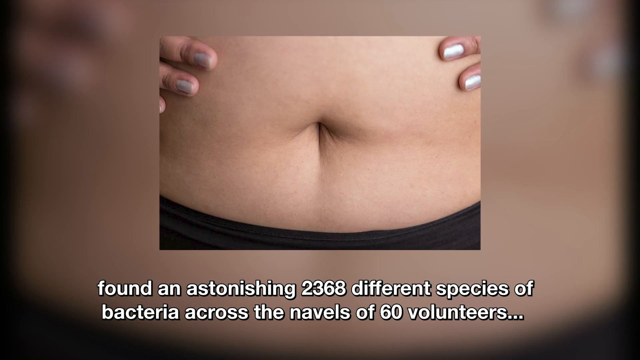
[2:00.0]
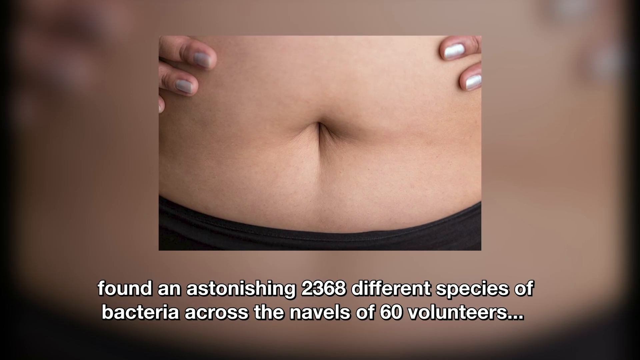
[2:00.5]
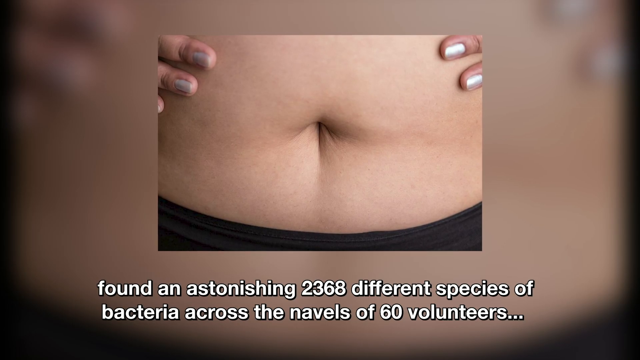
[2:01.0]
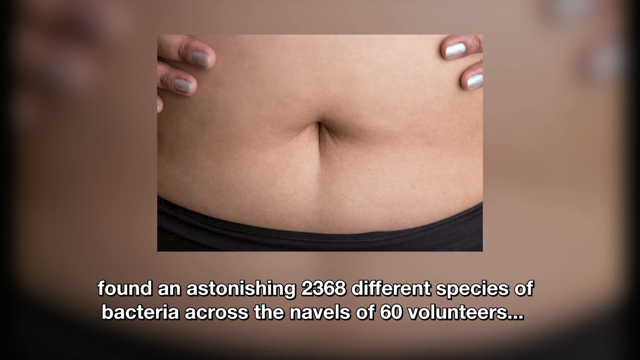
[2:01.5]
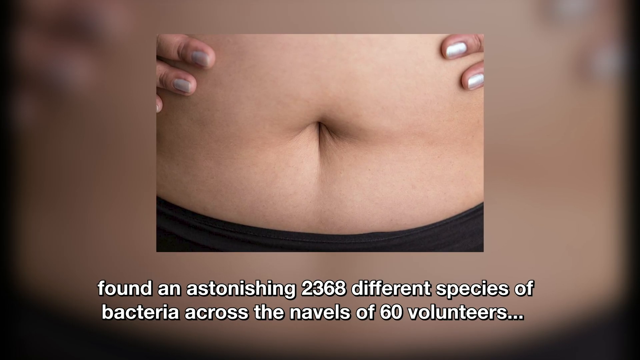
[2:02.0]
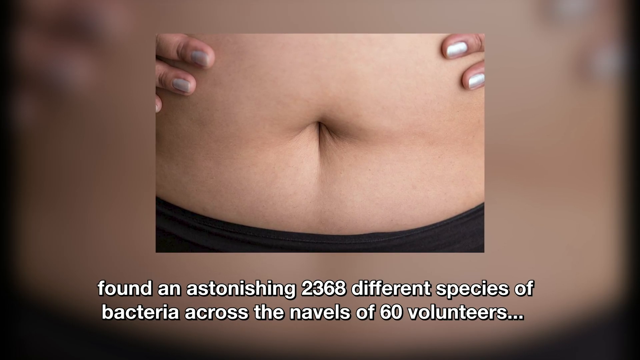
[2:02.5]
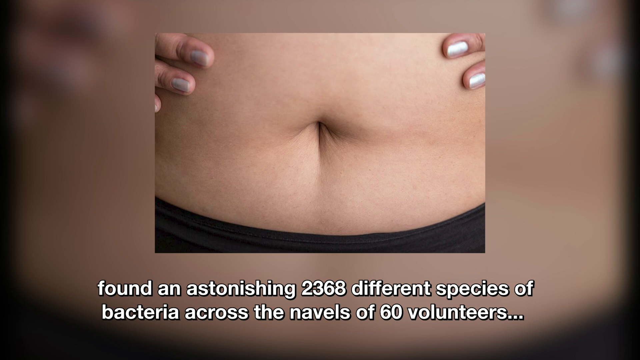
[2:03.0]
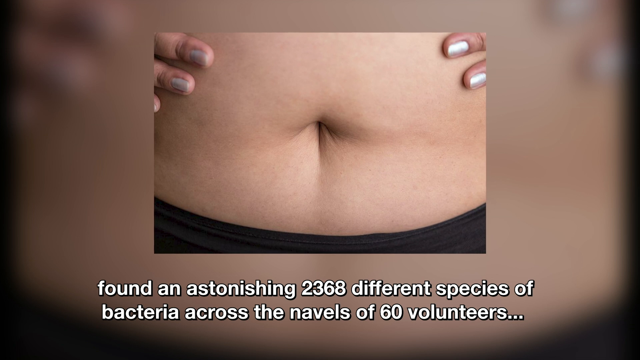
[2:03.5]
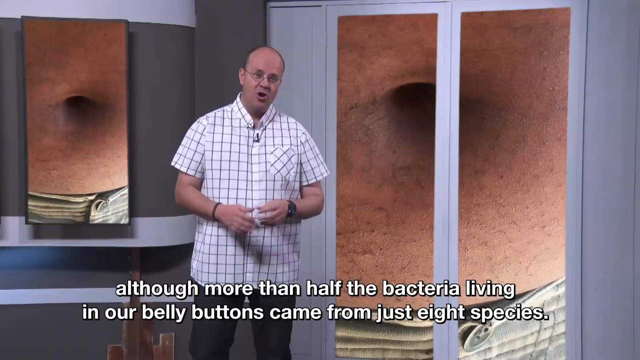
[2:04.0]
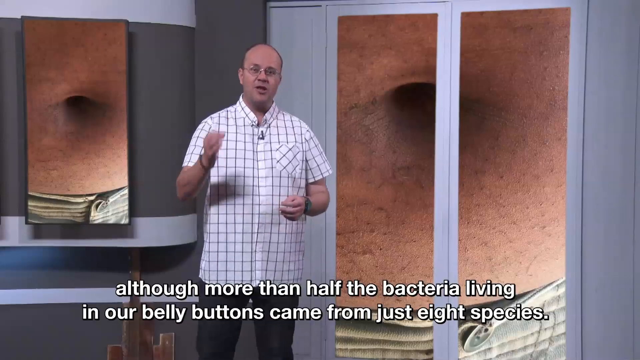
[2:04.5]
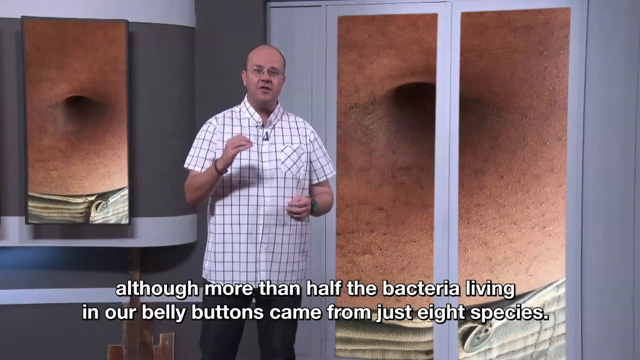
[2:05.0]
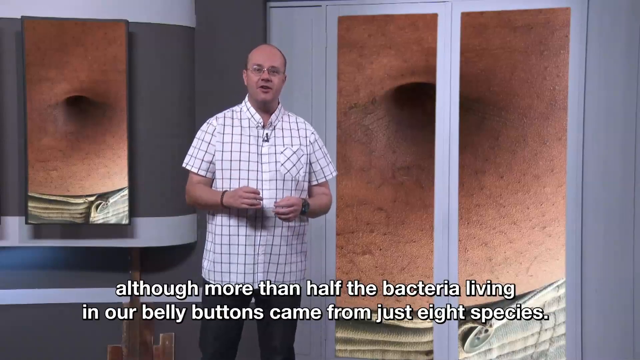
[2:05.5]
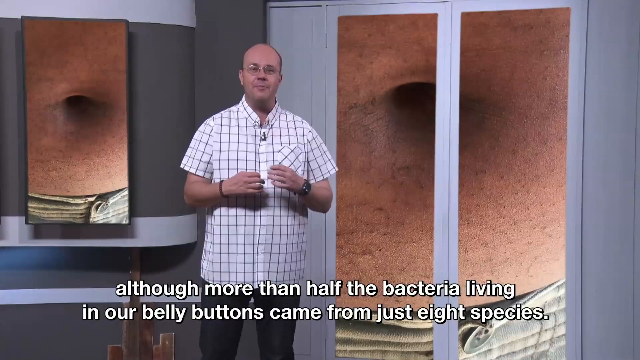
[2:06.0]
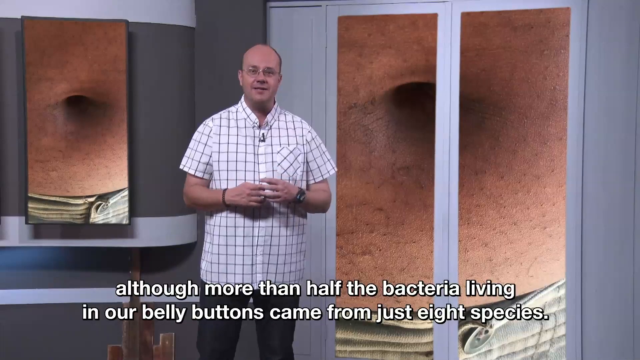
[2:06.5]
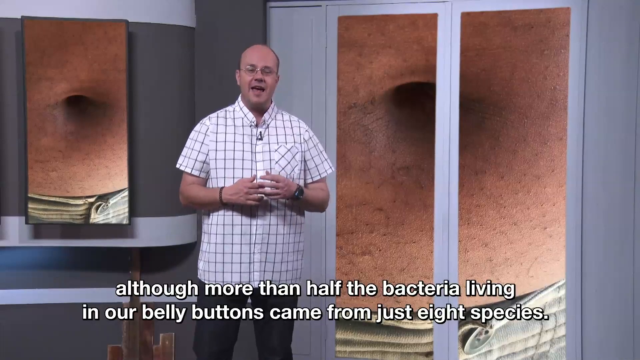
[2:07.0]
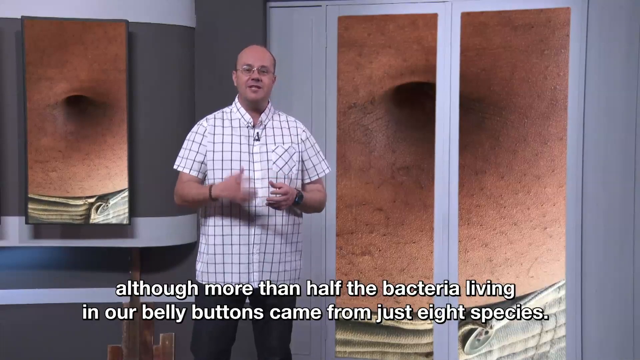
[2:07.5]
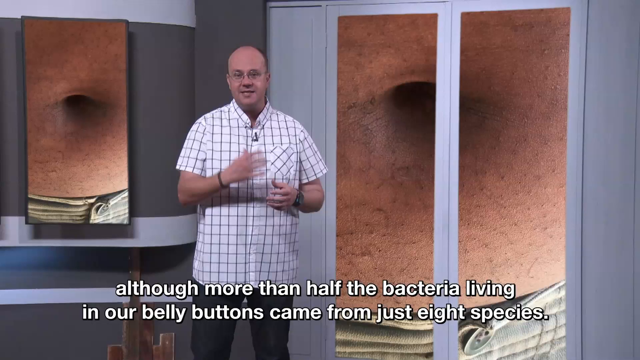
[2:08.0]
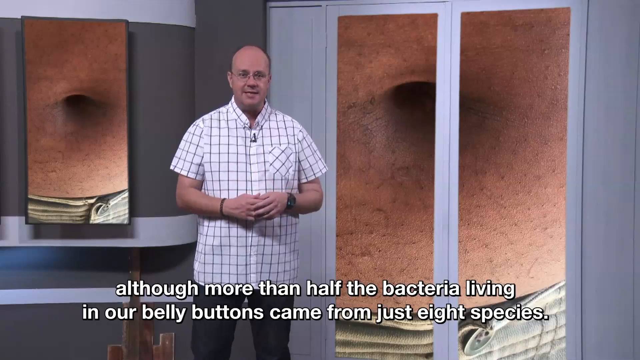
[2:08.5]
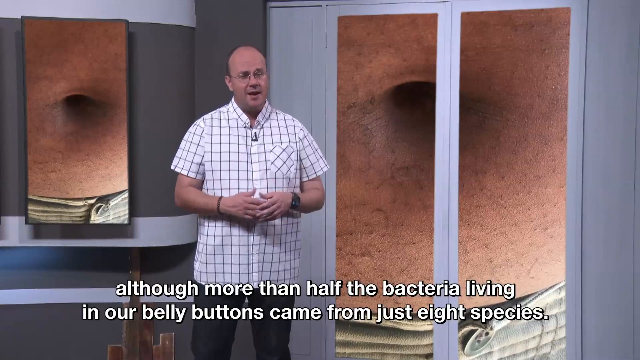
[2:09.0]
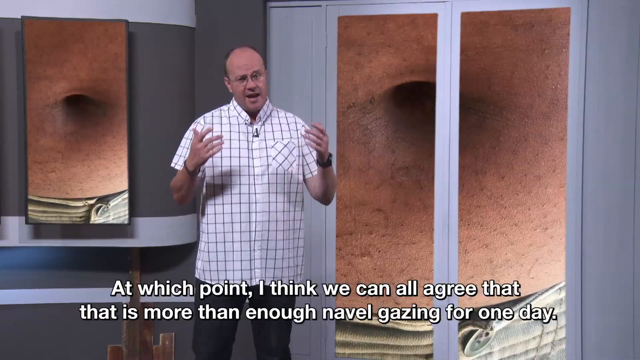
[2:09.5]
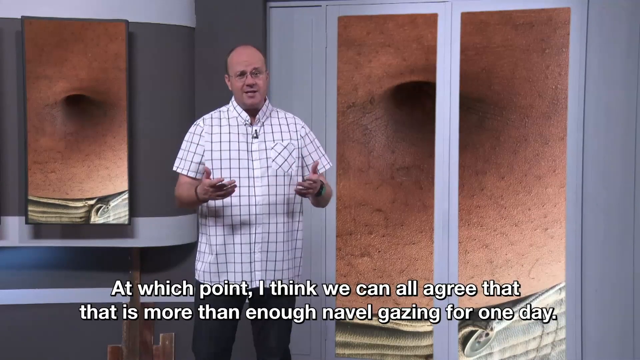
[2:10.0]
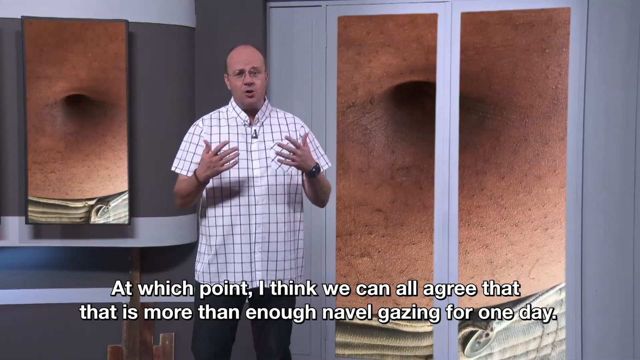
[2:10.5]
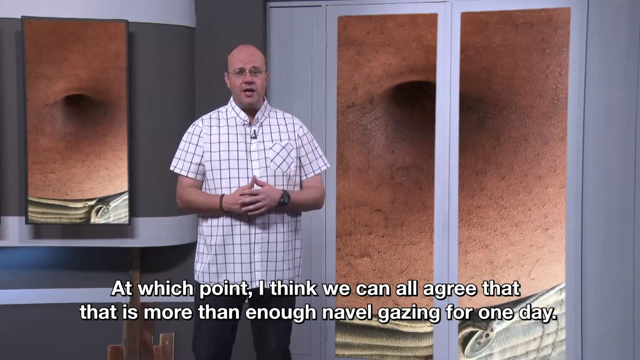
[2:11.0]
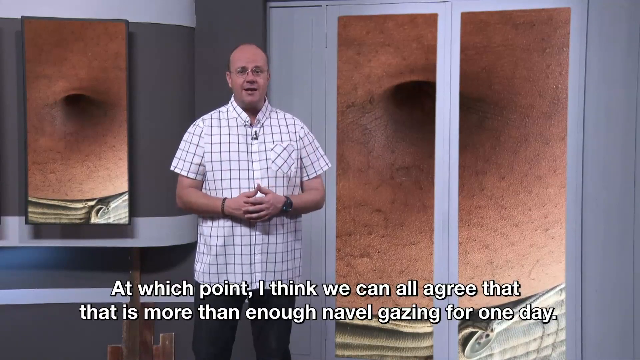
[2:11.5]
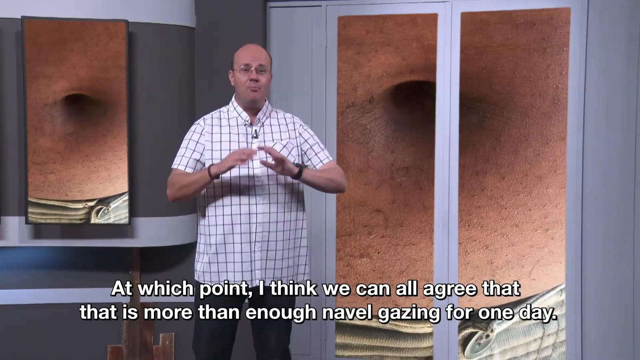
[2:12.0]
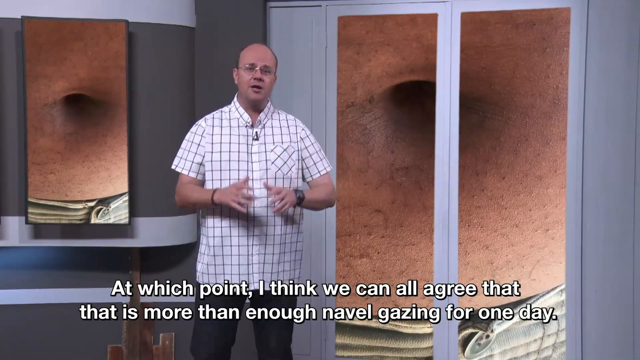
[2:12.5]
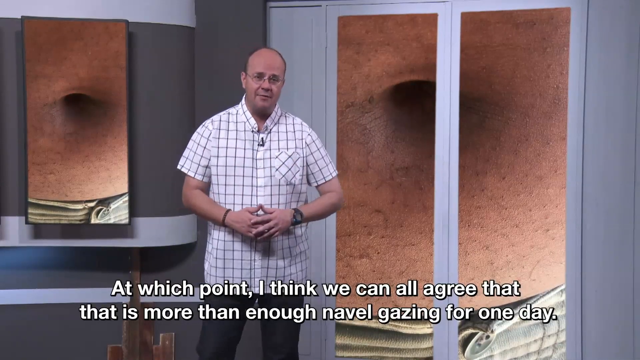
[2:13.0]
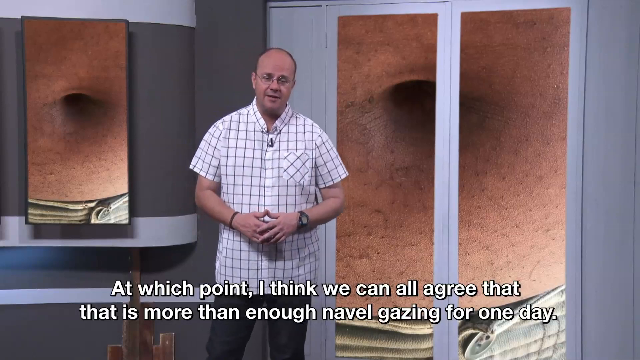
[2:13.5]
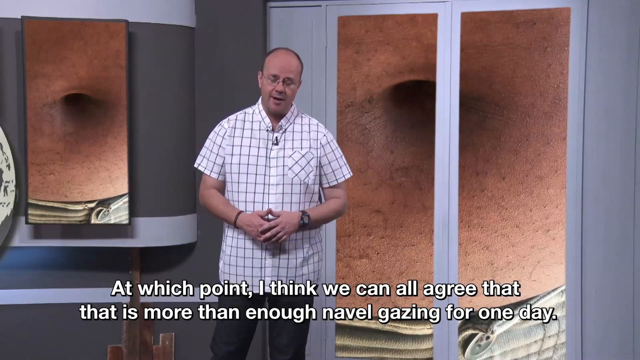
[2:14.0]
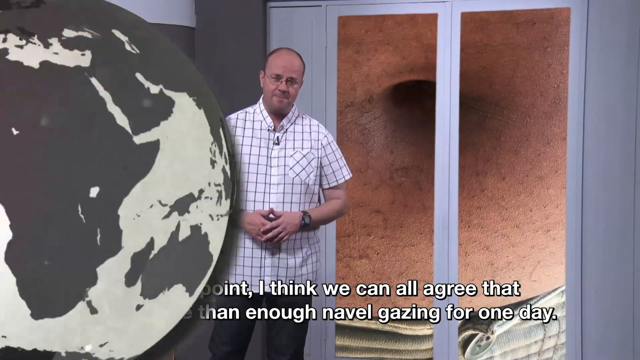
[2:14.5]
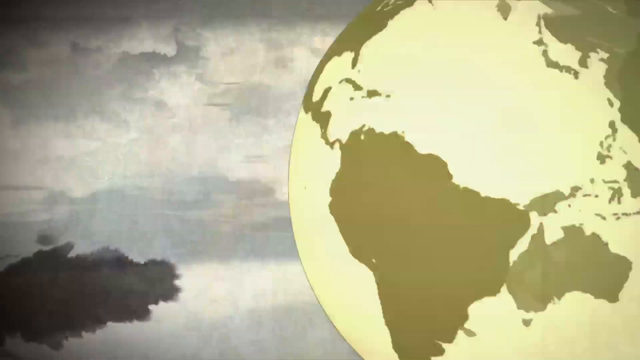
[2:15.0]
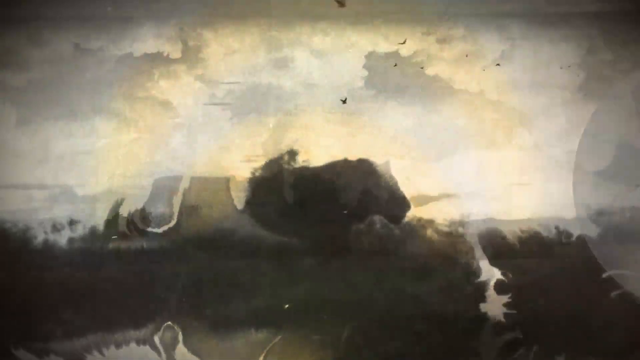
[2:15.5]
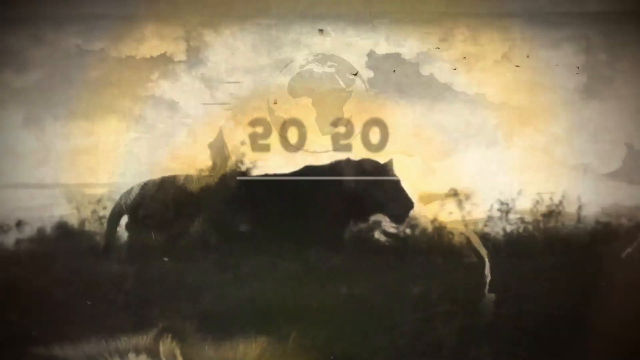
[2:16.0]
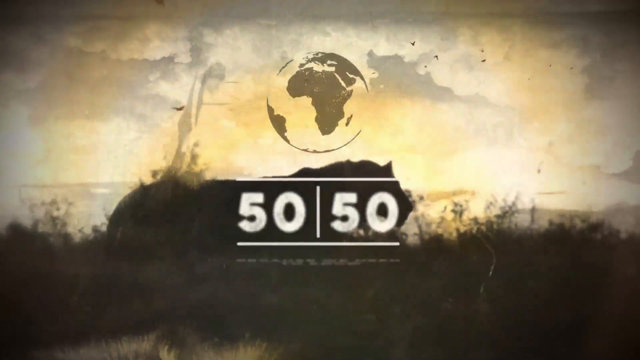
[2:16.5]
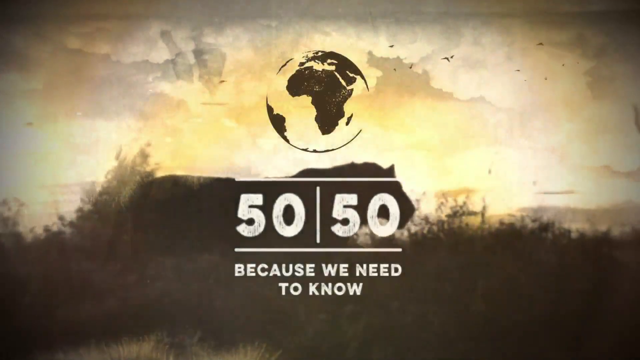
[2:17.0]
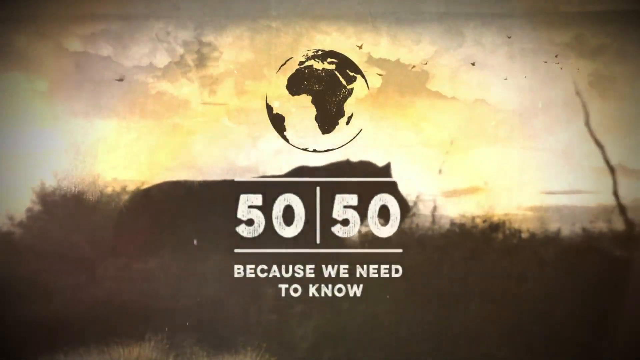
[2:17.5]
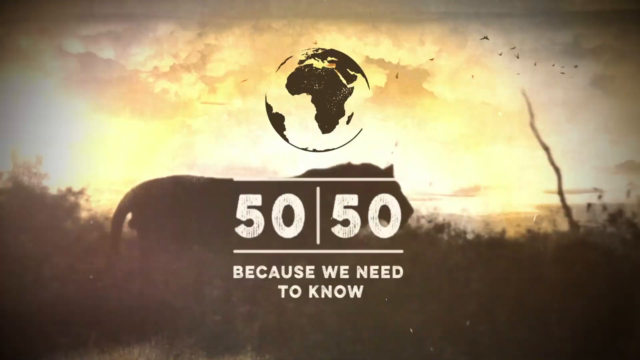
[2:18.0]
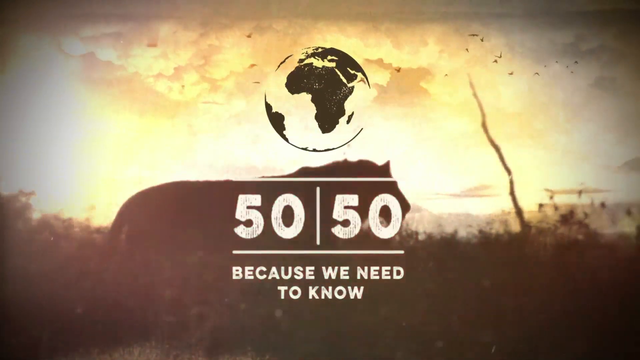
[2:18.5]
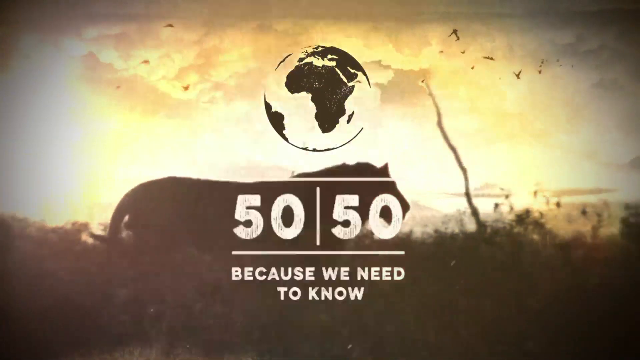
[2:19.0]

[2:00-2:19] The text continues: "Although, more than half of the bacteria living in our bellybuttons came from just eight species. At which point I think we can all agree that there that is more than enough navel gazing for one day." The gentleman speaking wears a white short-sleeved button-down shirt; he is going bald and is probably in his 50s. At the end of the video, "50-50 because we need to know" appears with a picture of the earth globe, and underneath it a lion walks from left to right as the video ends.